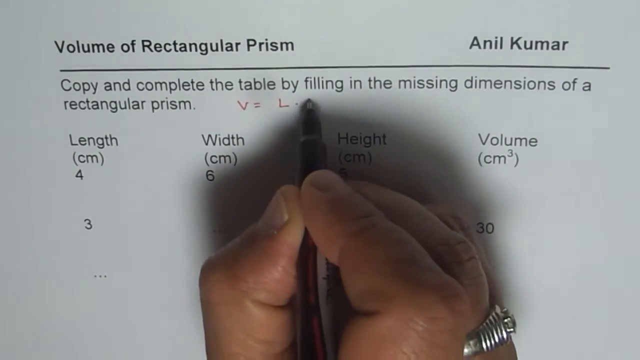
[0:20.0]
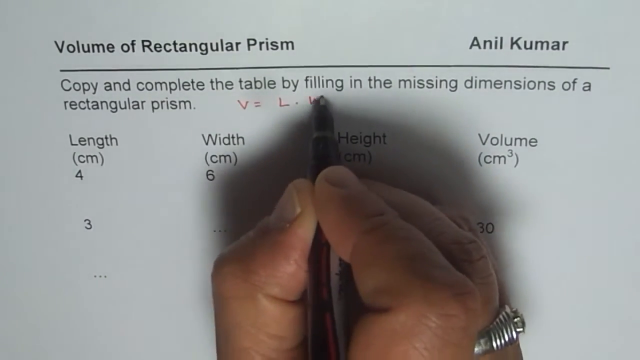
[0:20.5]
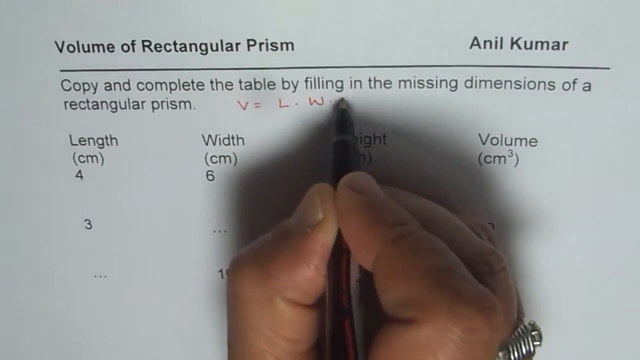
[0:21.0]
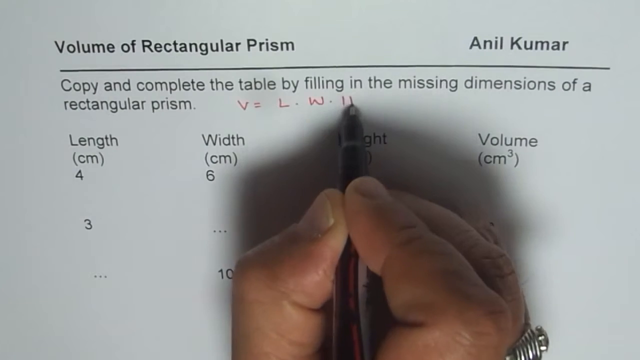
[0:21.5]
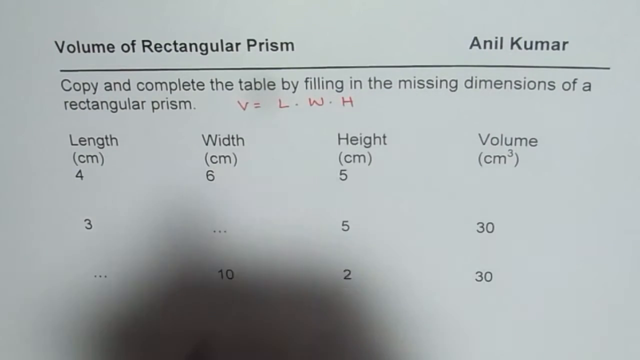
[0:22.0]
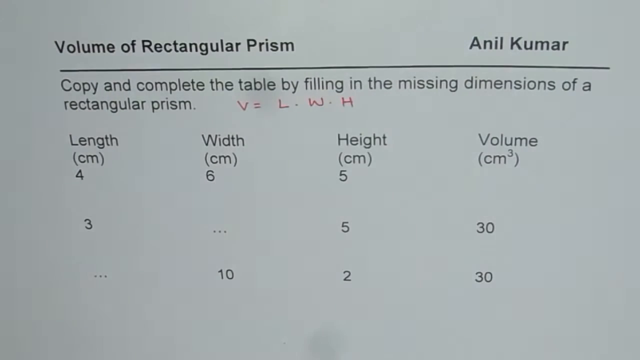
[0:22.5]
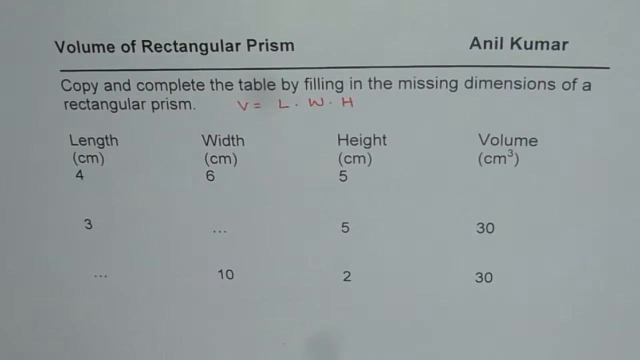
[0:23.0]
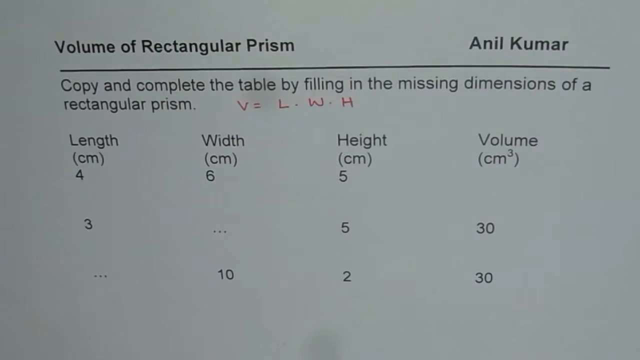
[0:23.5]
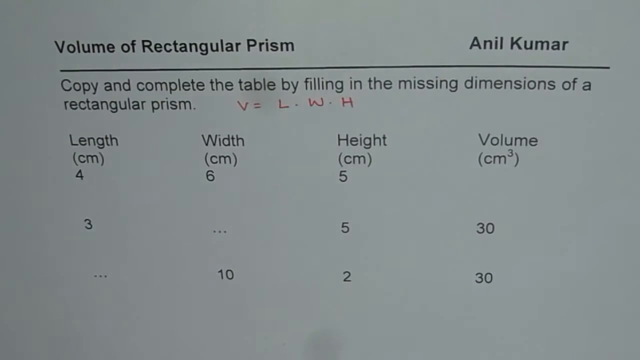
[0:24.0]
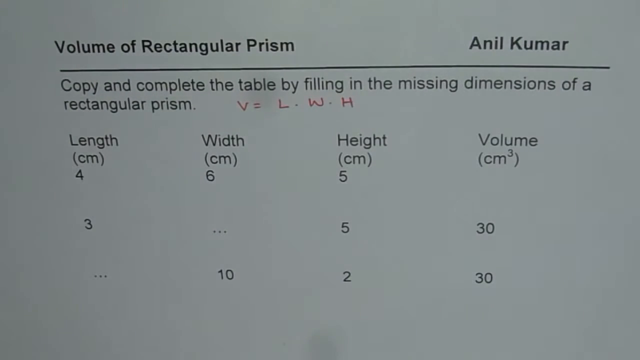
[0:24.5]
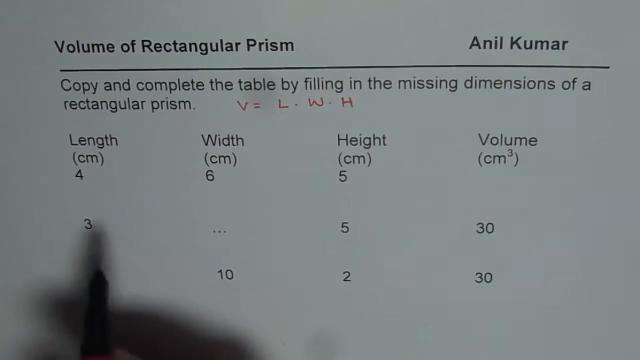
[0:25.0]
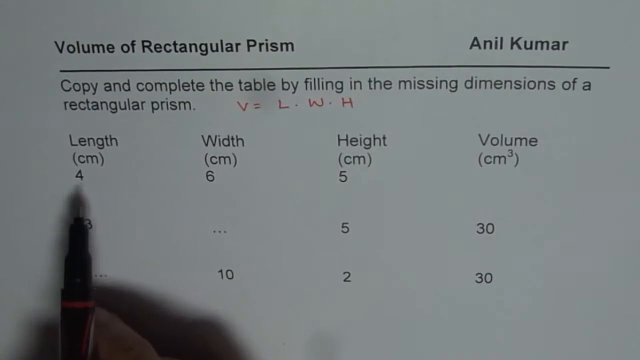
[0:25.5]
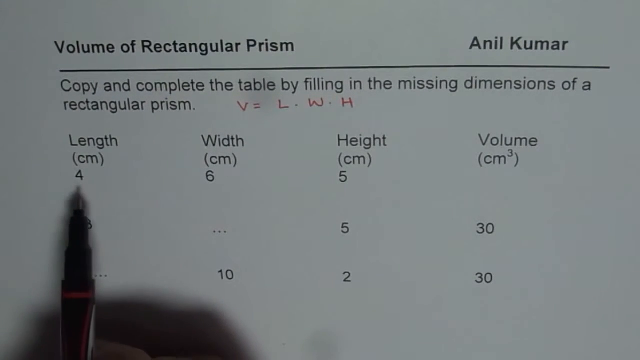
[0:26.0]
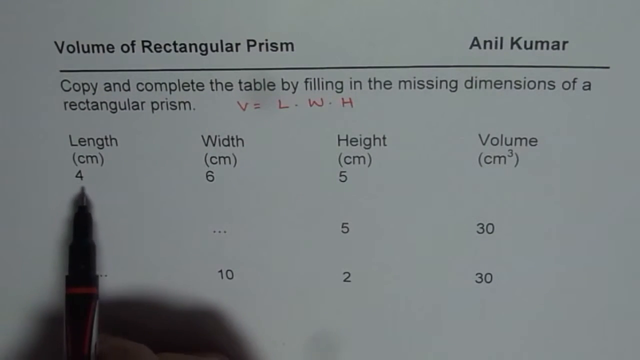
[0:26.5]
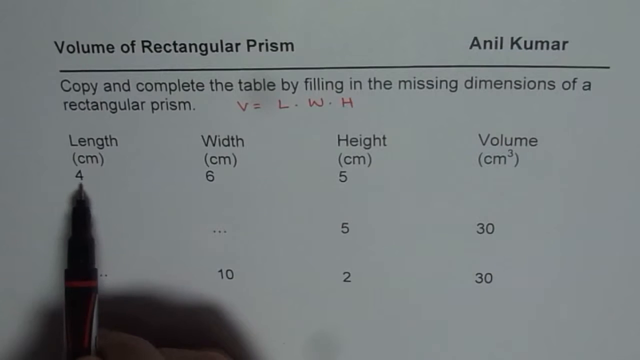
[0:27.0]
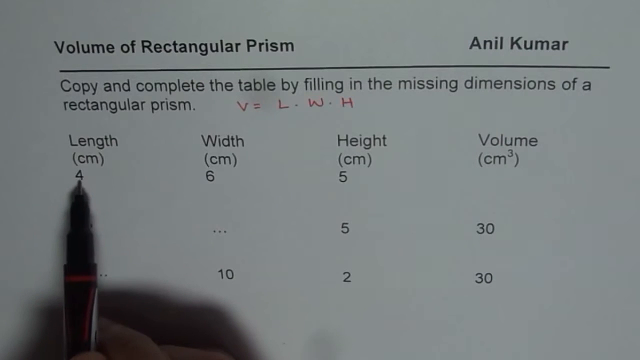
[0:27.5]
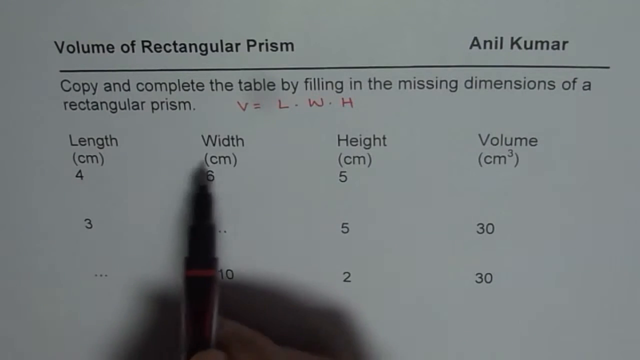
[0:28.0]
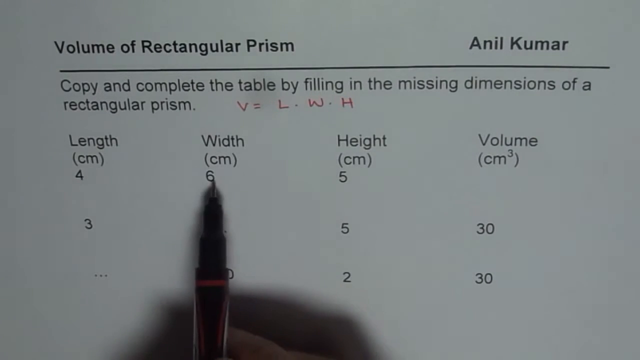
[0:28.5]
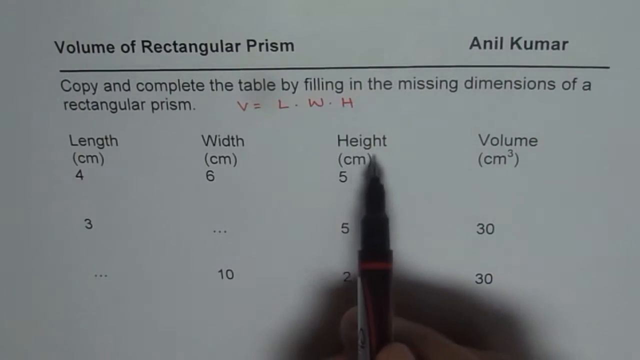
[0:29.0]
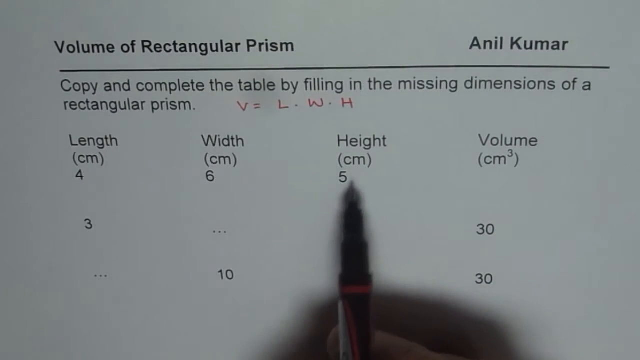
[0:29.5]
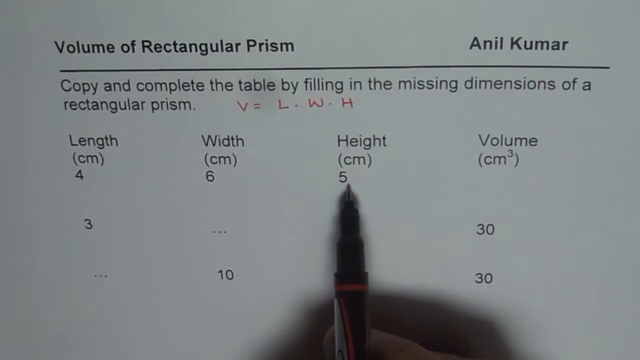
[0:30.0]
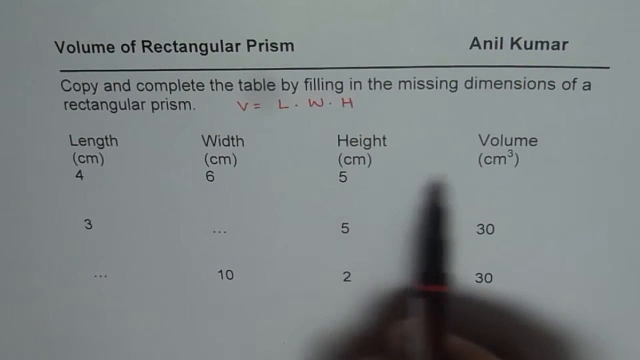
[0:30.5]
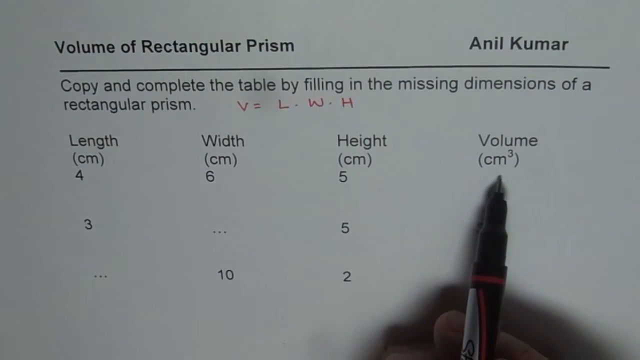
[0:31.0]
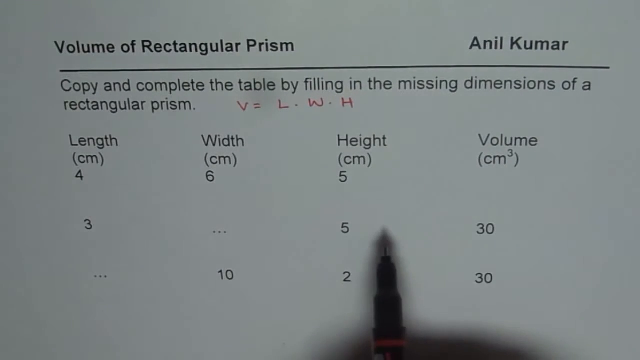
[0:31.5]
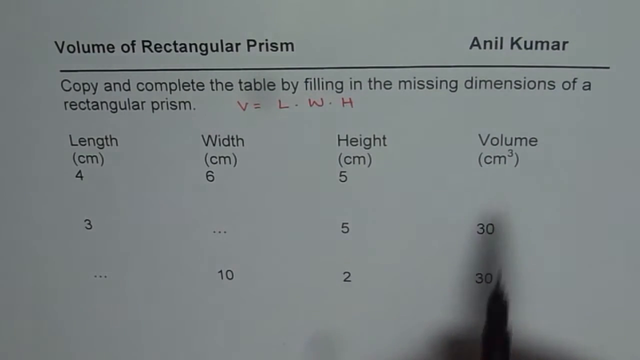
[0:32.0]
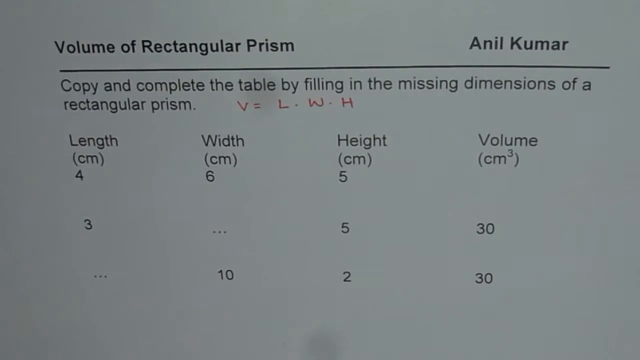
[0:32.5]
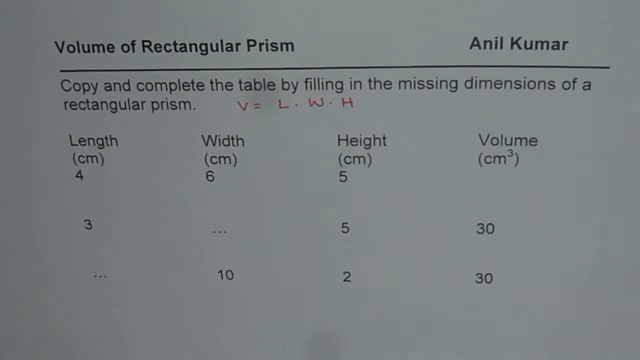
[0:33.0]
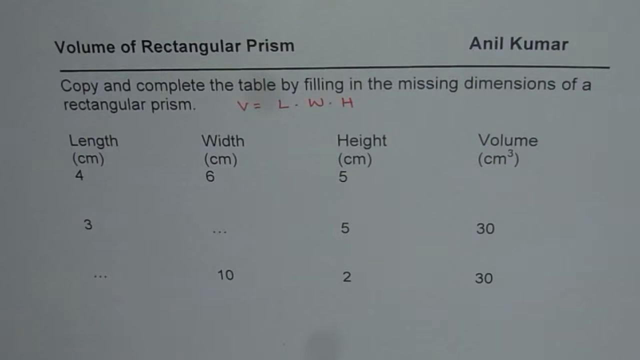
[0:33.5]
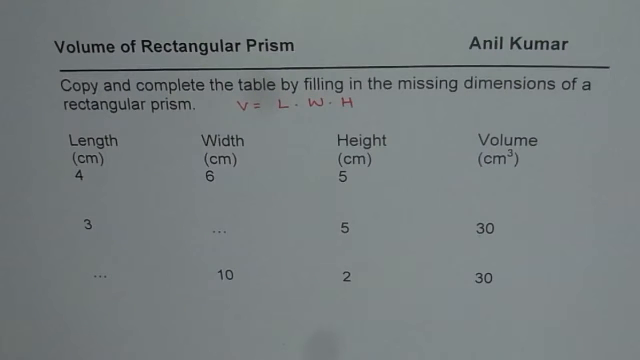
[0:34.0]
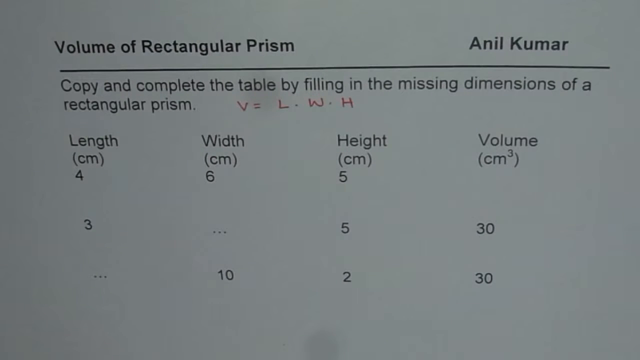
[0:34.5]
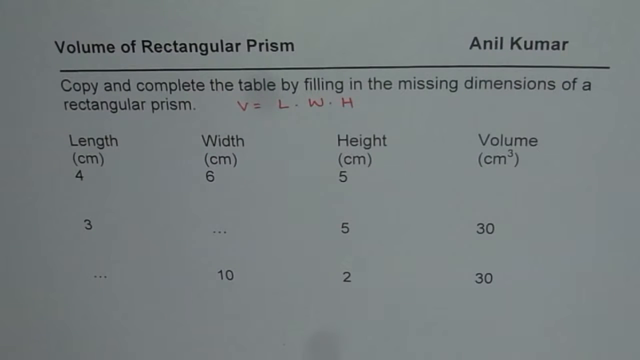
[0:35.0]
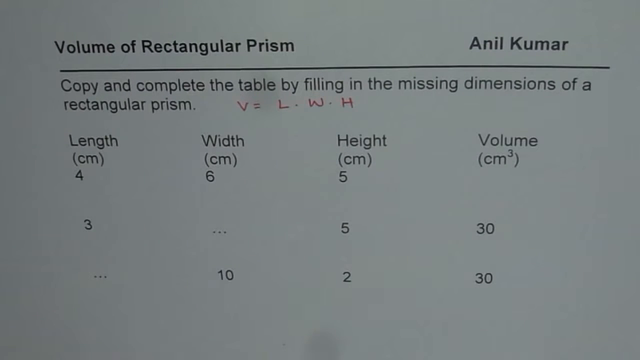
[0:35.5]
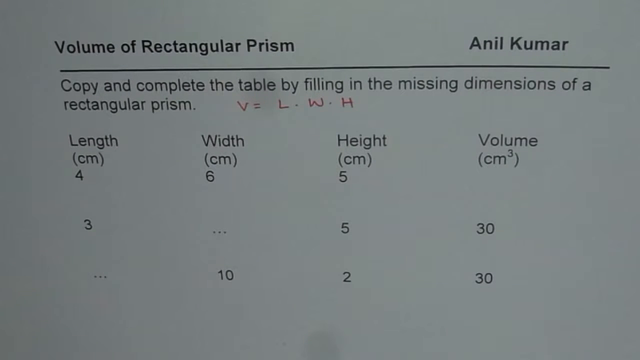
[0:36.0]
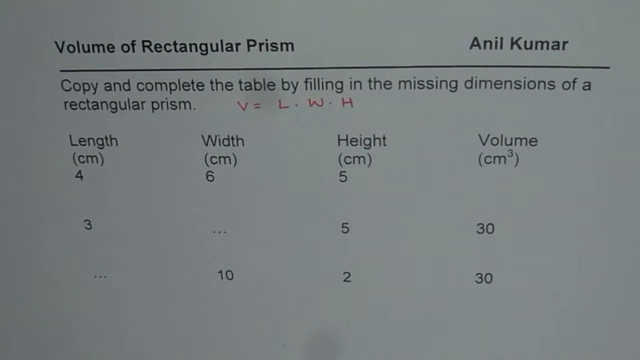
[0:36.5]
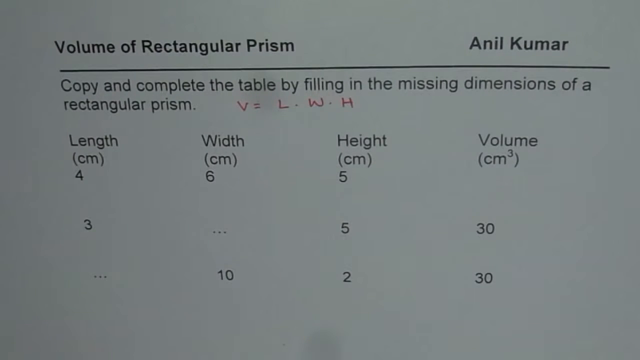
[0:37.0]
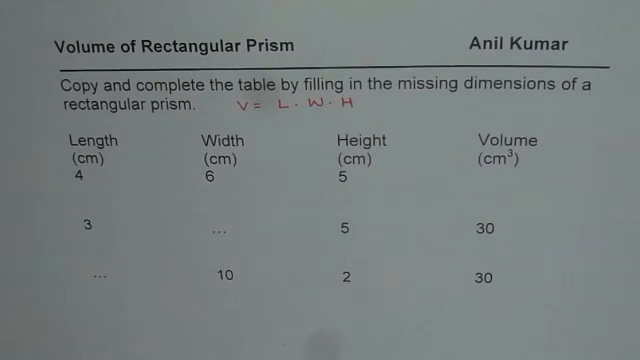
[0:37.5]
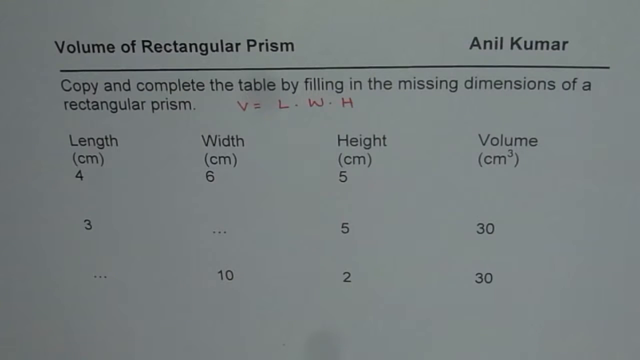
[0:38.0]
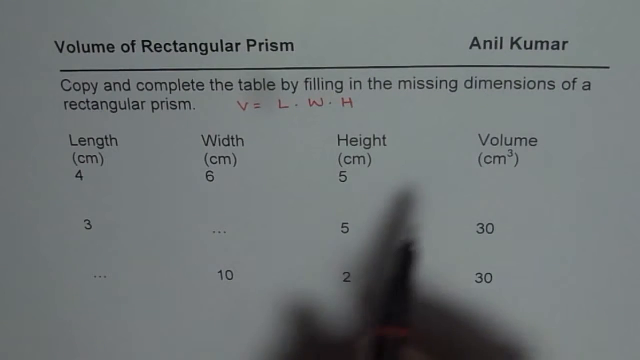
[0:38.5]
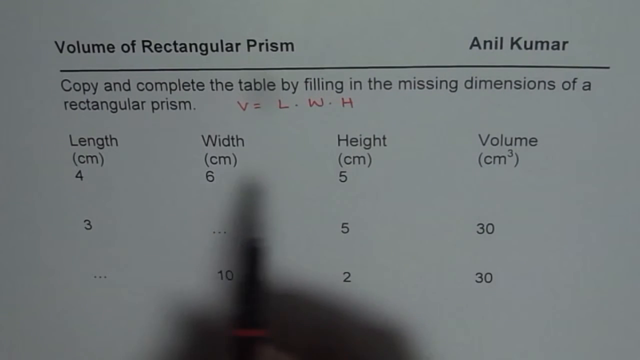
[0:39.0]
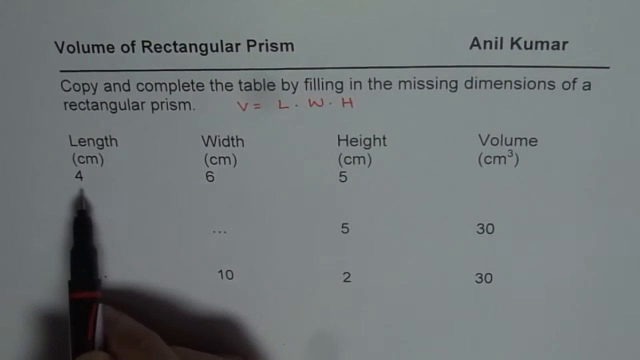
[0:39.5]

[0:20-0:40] The person's right hand and fingers are visible as they write above the columns for length, width, height, and volume, completing "V = LWH," which appears to mean volume equals length, width, and height. After writing it, they remove their hand, and neither the hand nor the pen is visible. After a few seconds the hand returns, and the pen points to the 4 under the length section and moves around in that column. It then moves to the 6 in the width column, to the height column where it points to the height heading, and then to the 5 in the height column. Next it goes to the volume column and points before resting between the height and volume columns, and the hand moves out of view once again.